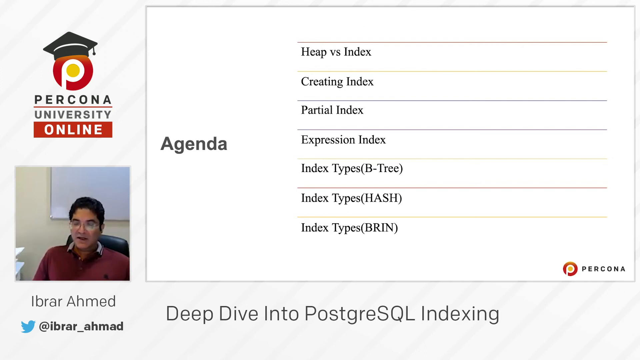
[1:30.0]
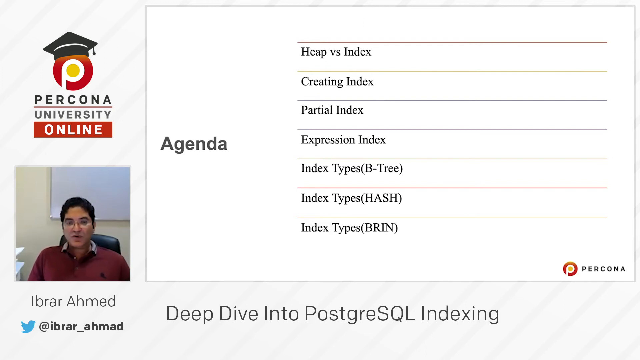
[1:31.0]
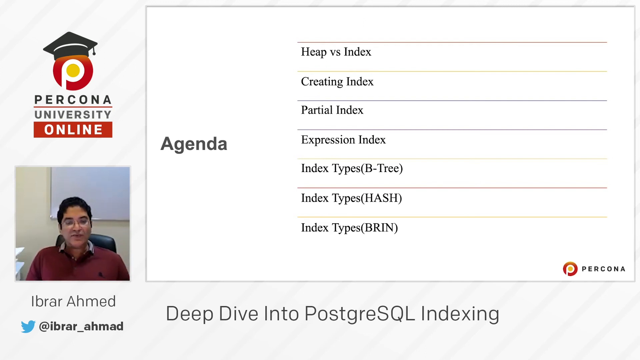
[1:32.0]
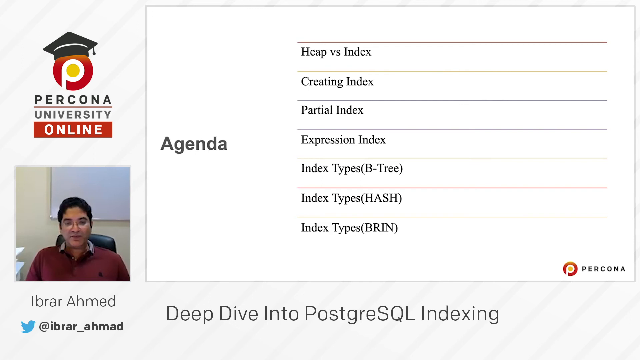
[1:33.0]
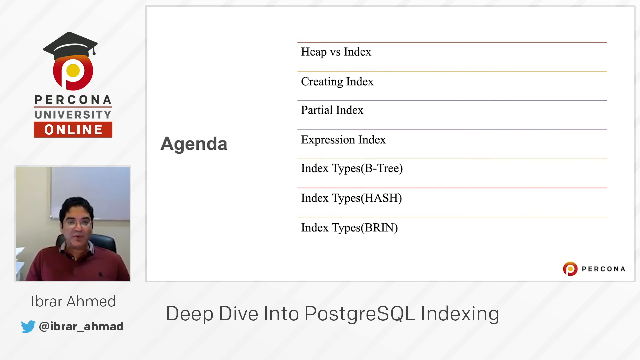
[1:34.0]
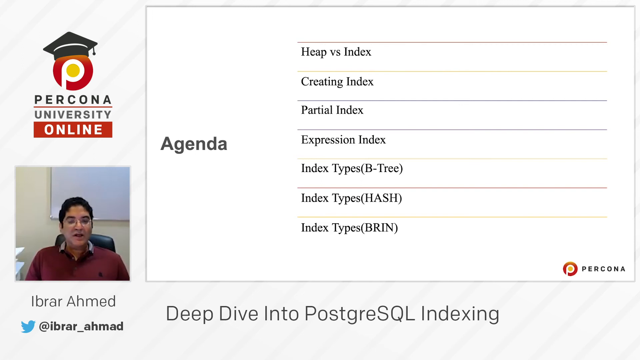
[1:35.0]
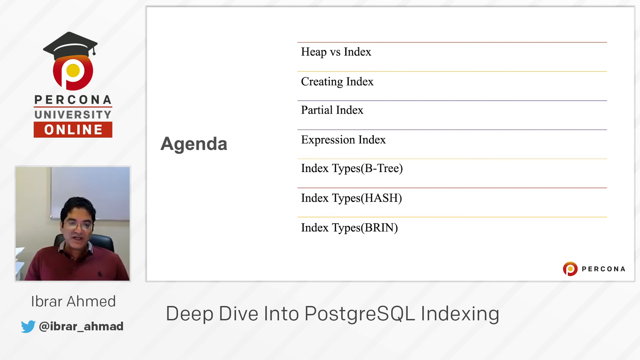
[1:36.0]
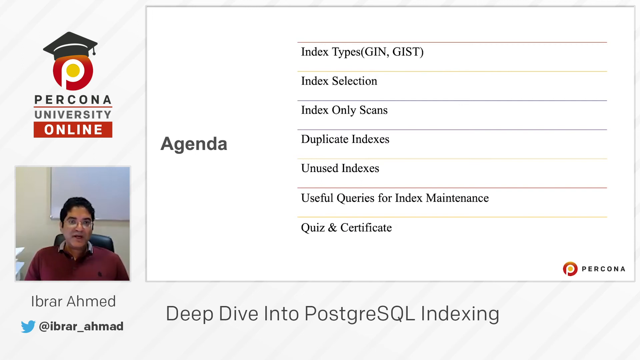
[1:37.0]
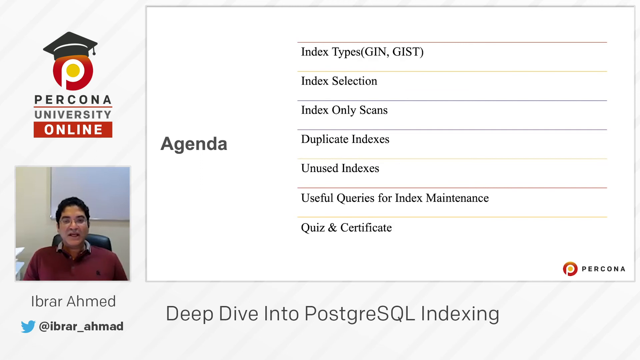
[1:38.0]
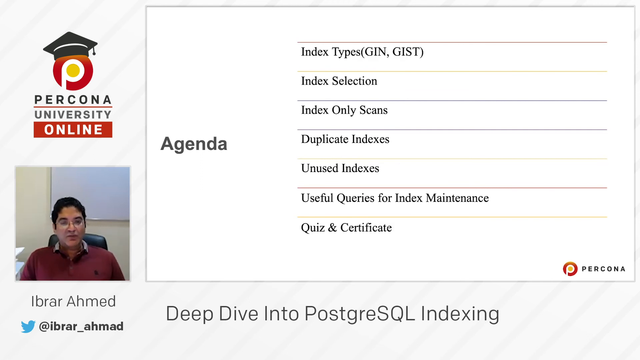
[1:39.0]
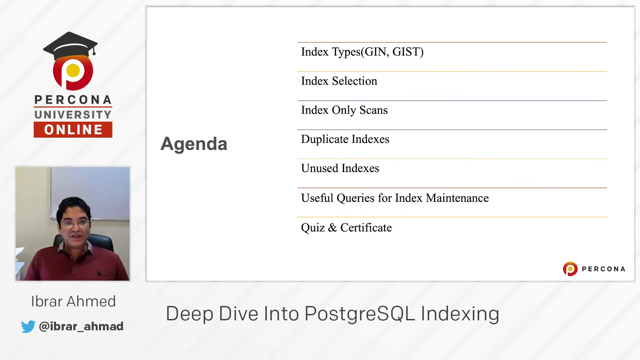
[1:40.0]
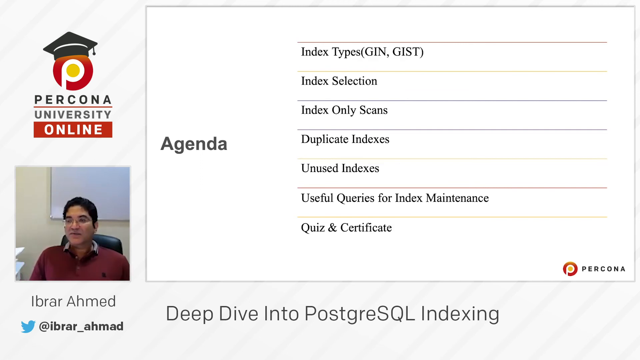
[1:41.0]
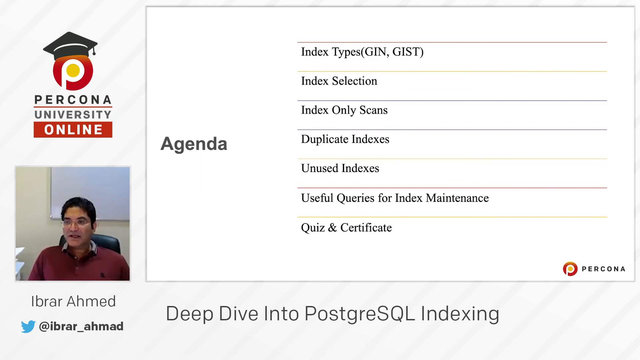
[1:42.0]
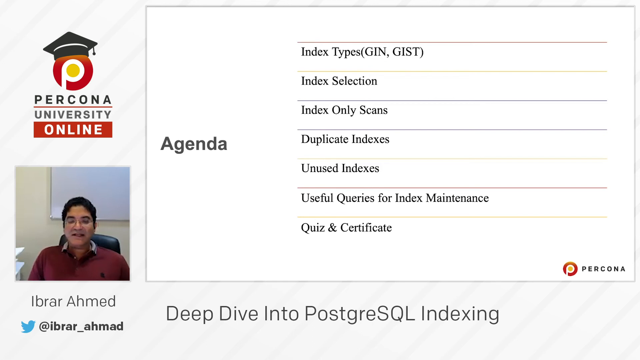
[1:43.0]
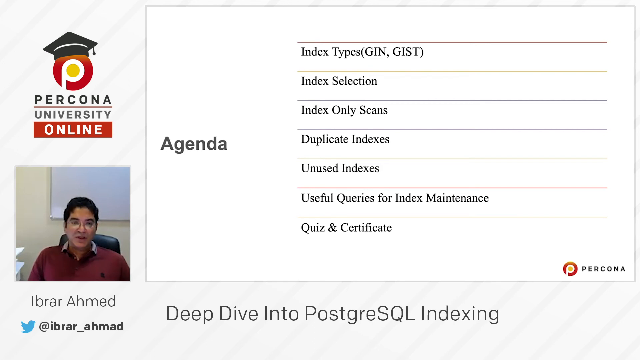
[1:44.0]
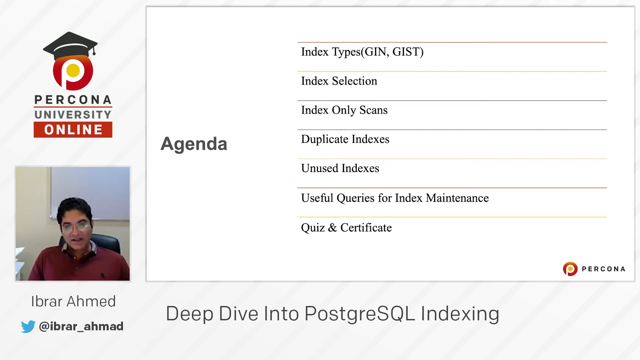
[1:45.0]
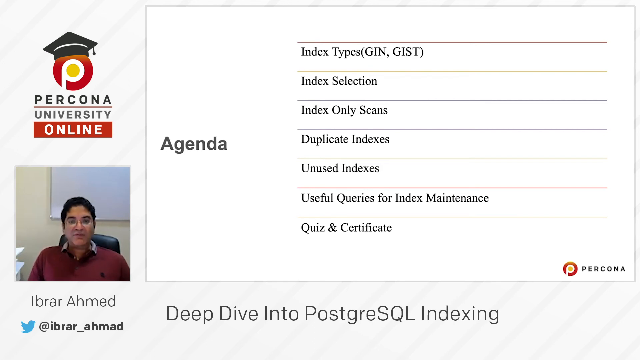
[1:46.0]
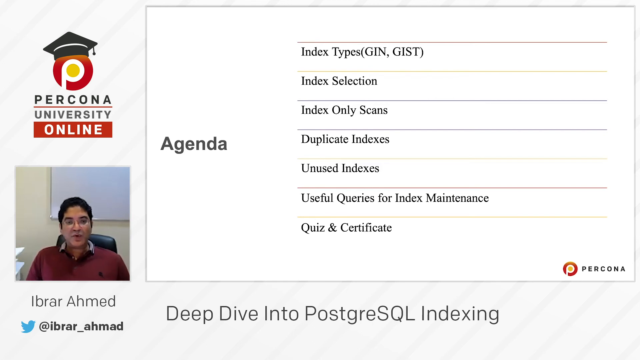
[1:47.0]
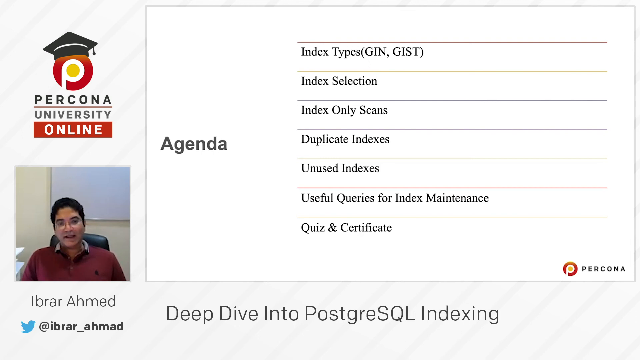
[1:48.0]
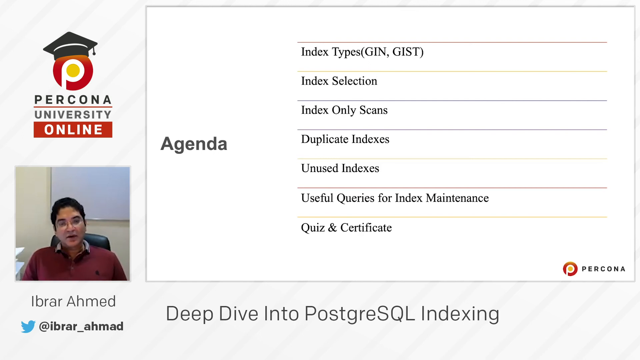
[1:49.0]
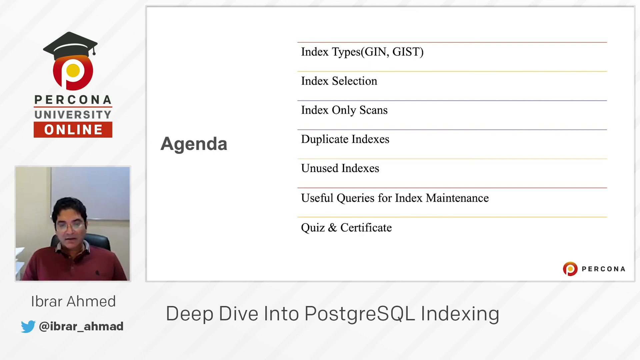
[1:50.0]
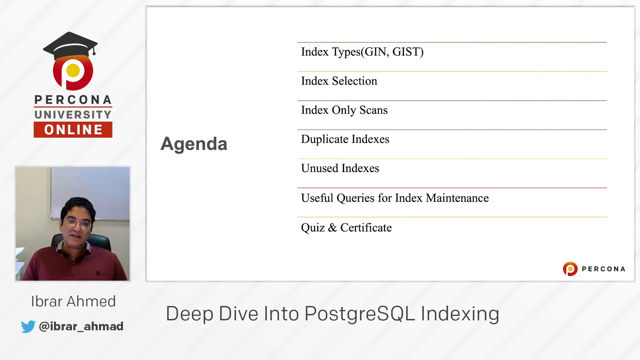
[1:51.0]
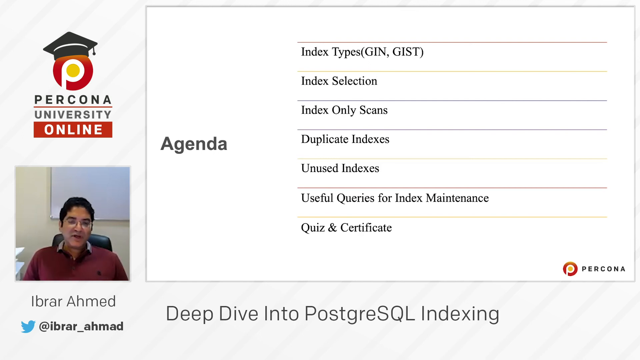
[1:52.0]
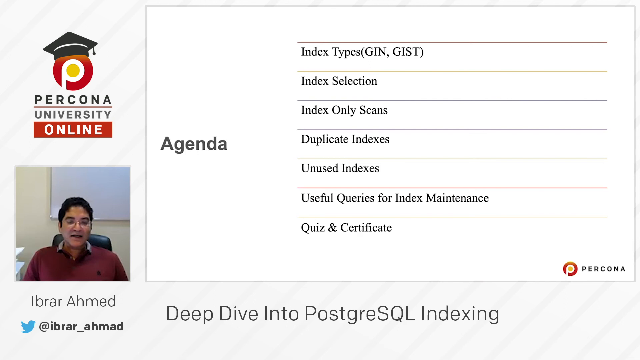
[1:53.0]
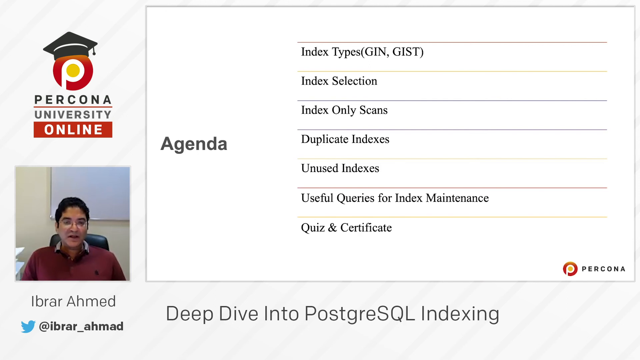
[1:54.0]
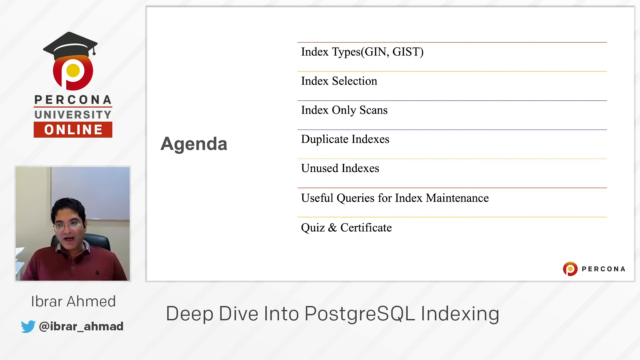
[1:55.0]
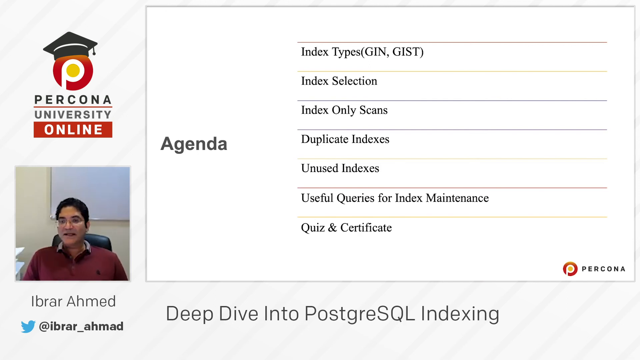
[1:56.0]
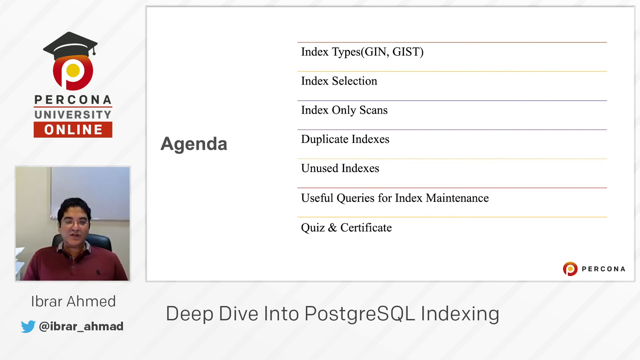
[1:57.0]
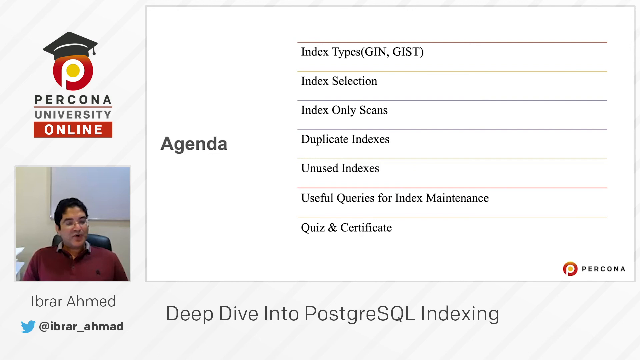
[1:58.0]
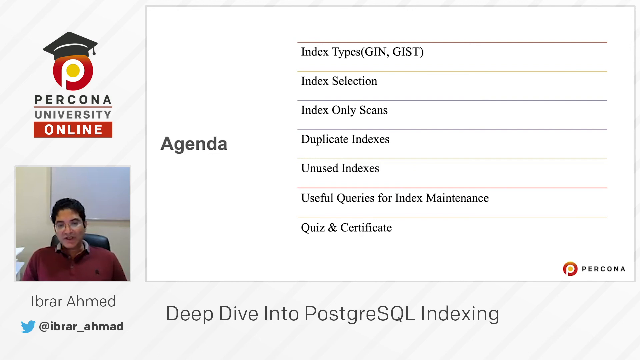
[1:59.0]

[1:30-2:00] A very large white box is labeled in black text "agenda," with red, yellow, and gray lines and black text between each line reading "heap versus index, creating index, partial index, expression index, index types B tree, index types hash, index types brin." A small Percona label is at the bottom with a red circle, a white P, and a yellow center. The same red circle is in the top left corner with a graduation hat on, along with black and gray text reading "Percona University" with a white line in between, and a red banner box with gold and white text reading "online." A live video feed shows a man with black hair and glasses talking to the camera, with his name at the bottom reading "Ibrar Ahmed" and the small blue Twitter bird with his handle. The title of the video reads "Deep Dive into PostgreSQL Indexing." He then transitions to another page with the same agenda layout and lines, with text reading "index types, GIN, GIST, index selection, index only scans, duplicate indexes, unused indexes, useful queries for index maintenance, and quiz and certificate."